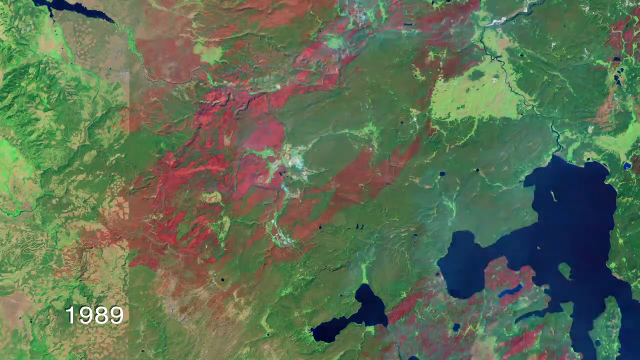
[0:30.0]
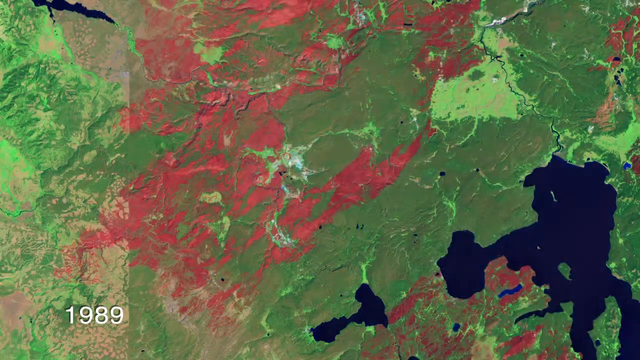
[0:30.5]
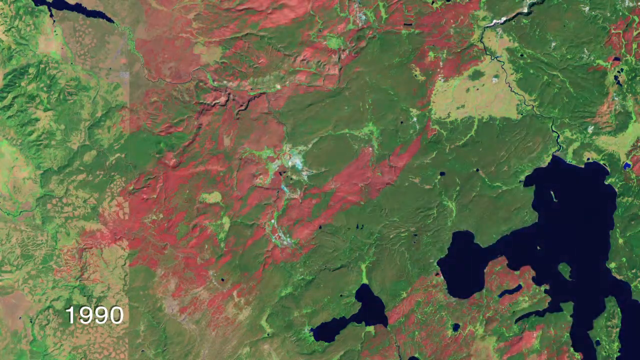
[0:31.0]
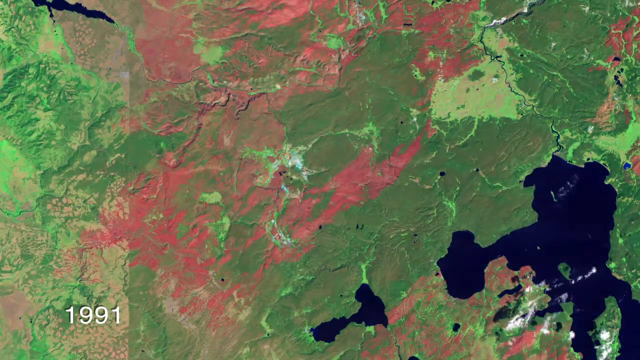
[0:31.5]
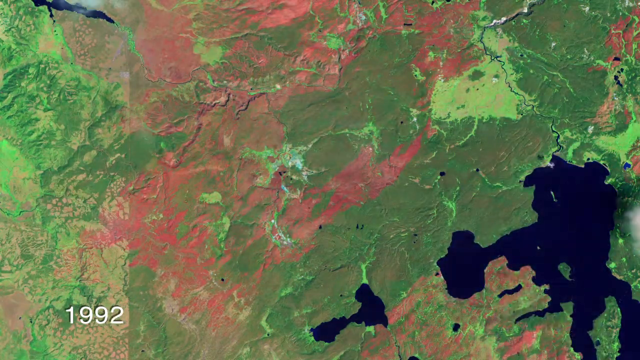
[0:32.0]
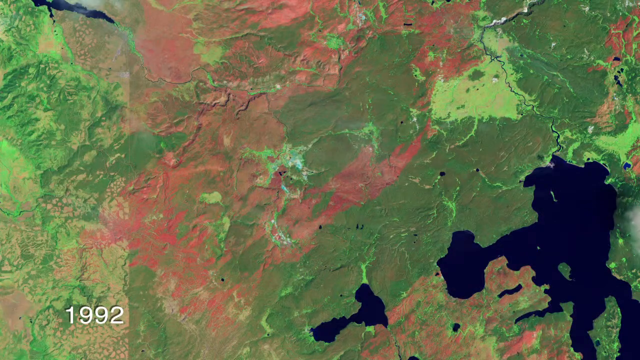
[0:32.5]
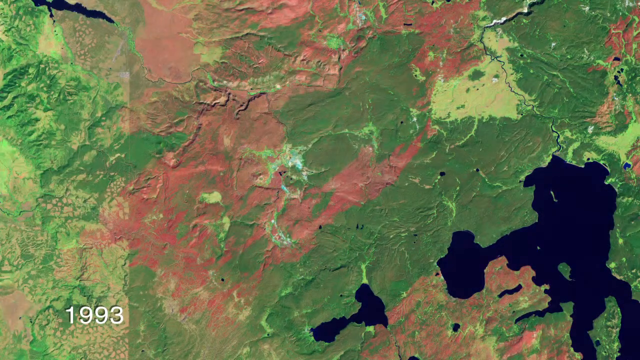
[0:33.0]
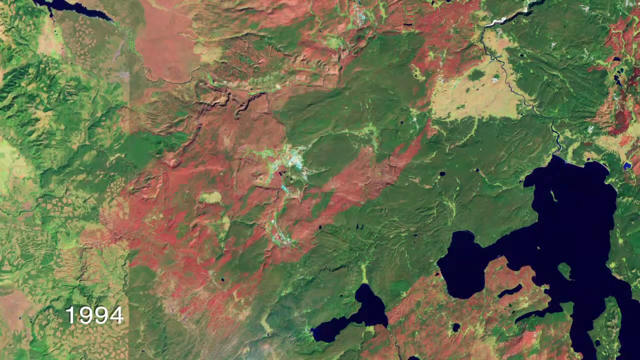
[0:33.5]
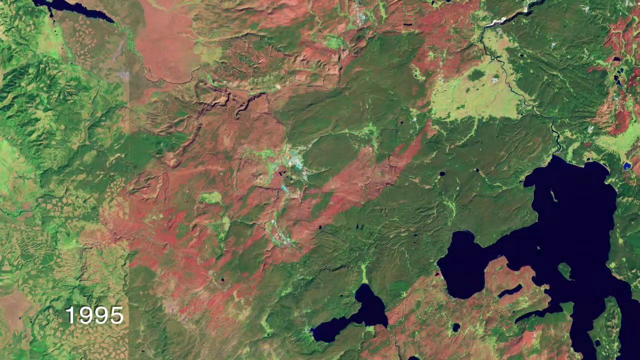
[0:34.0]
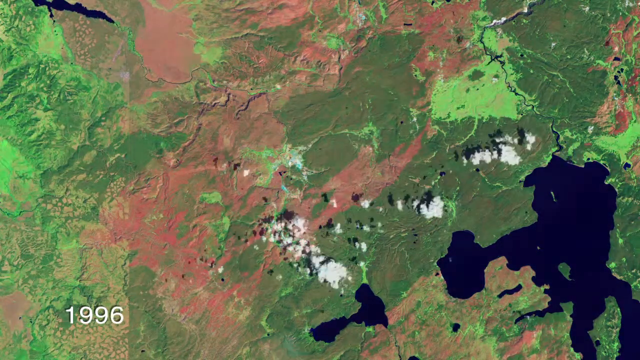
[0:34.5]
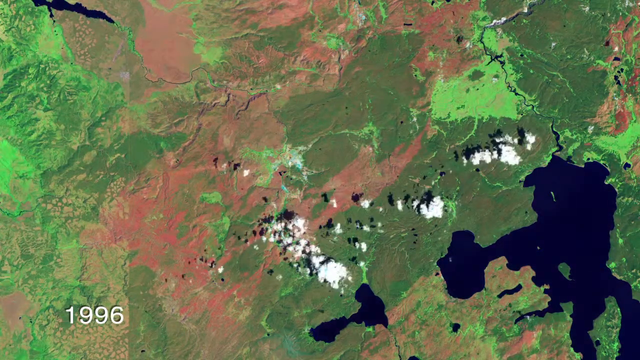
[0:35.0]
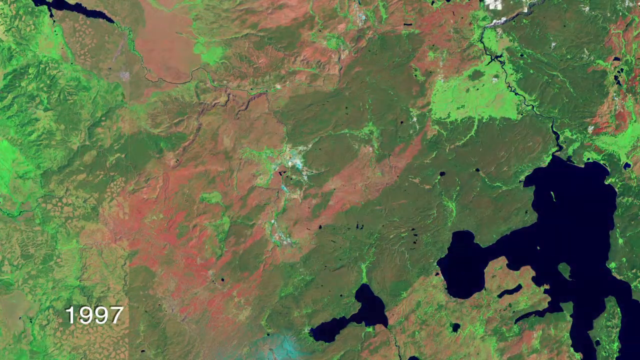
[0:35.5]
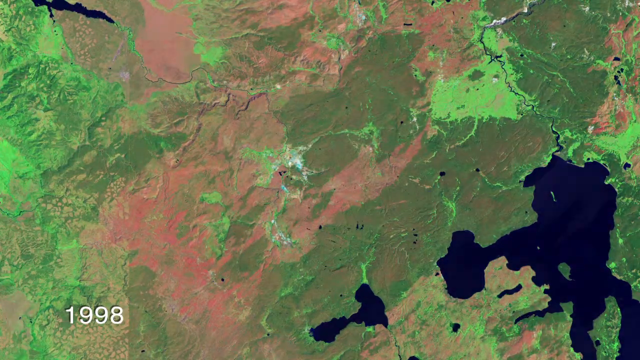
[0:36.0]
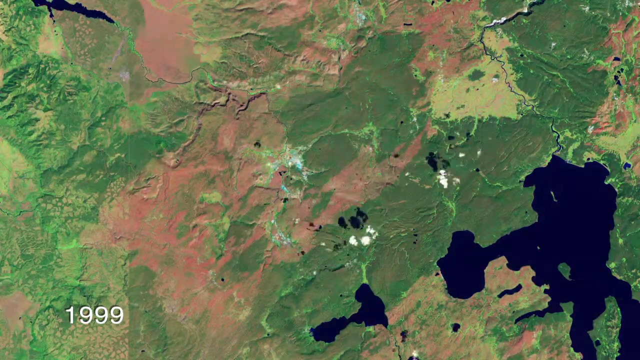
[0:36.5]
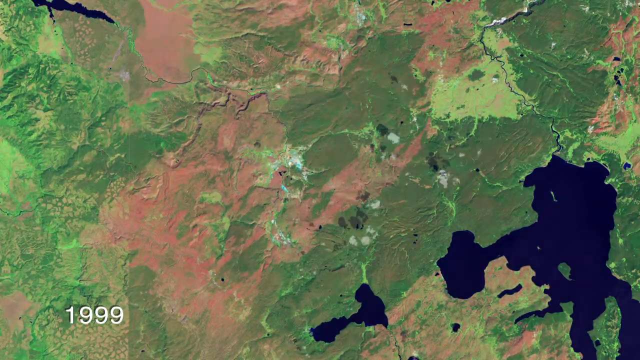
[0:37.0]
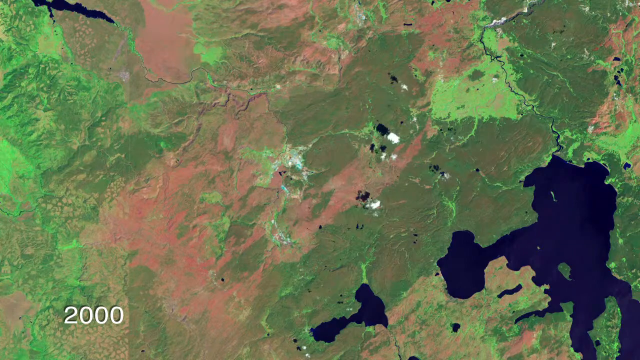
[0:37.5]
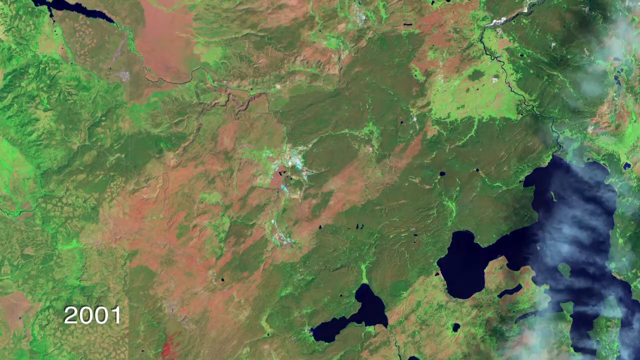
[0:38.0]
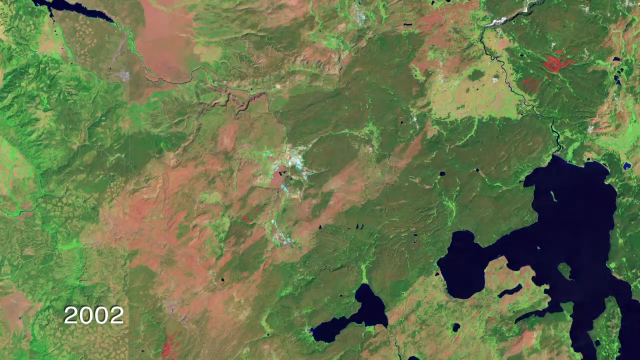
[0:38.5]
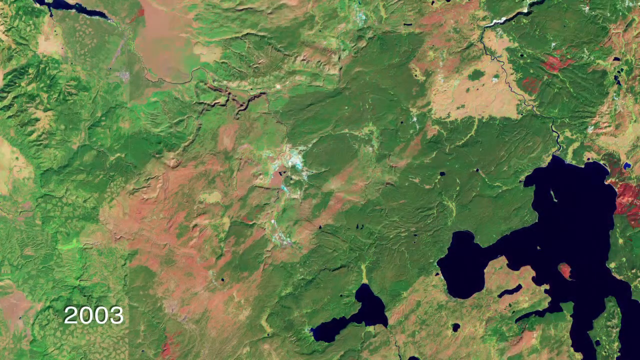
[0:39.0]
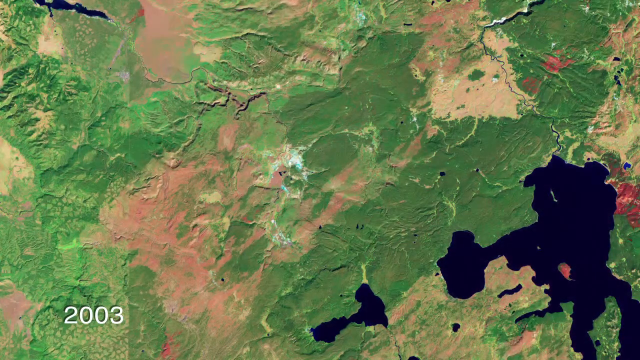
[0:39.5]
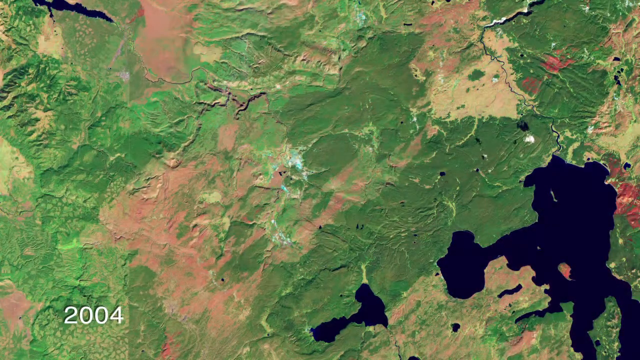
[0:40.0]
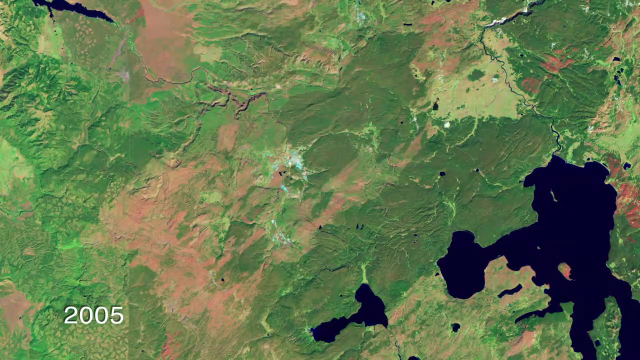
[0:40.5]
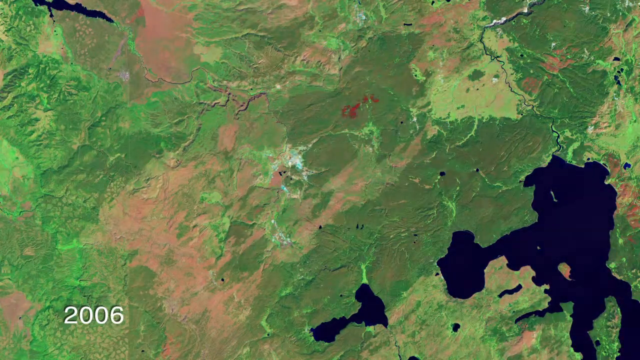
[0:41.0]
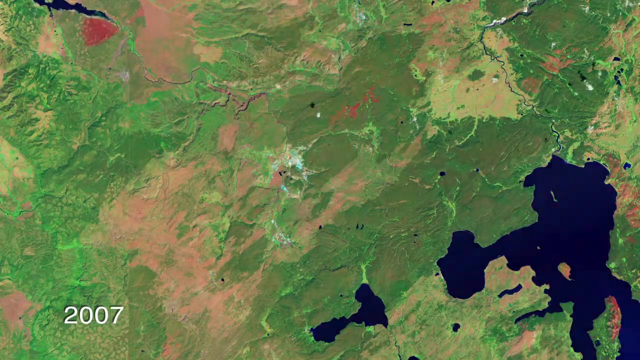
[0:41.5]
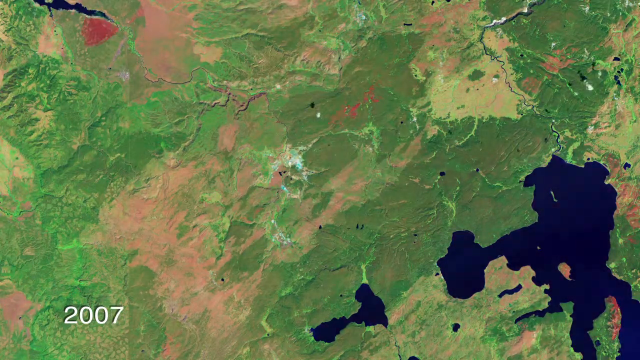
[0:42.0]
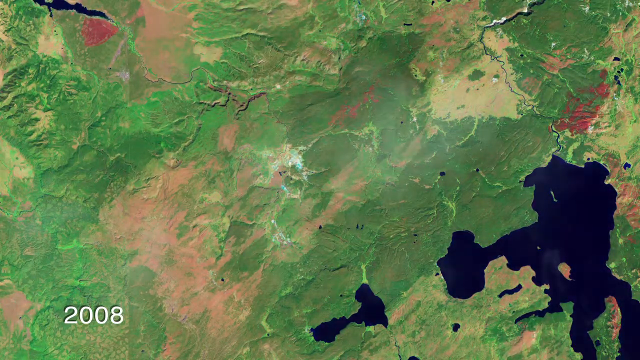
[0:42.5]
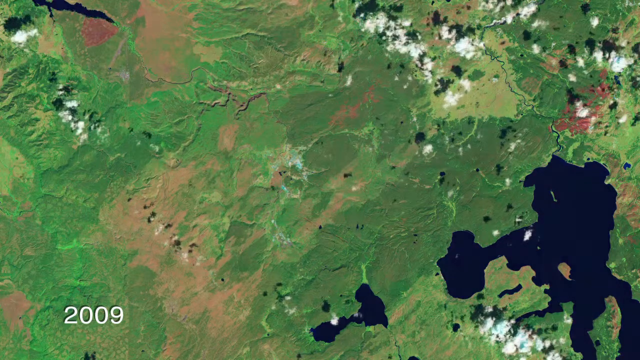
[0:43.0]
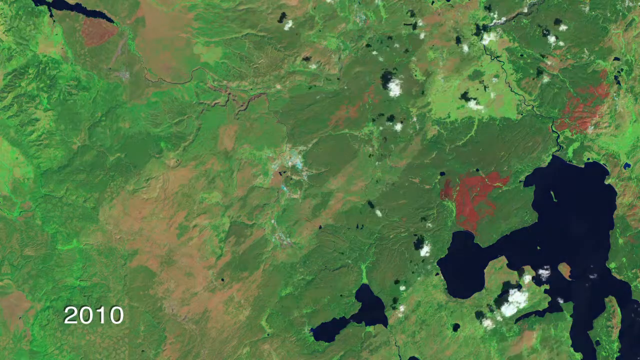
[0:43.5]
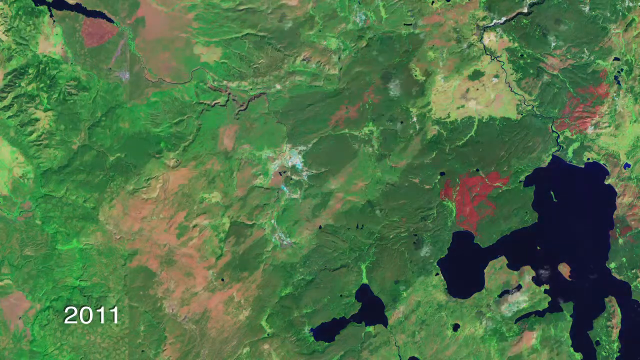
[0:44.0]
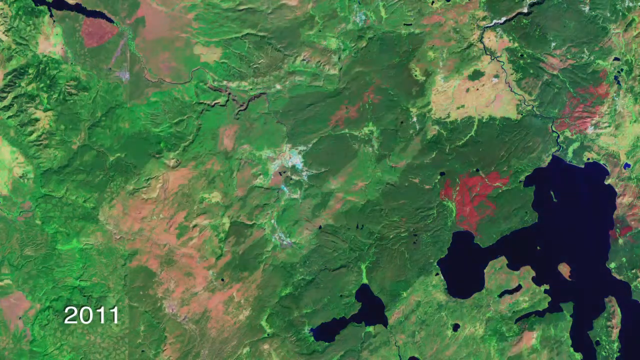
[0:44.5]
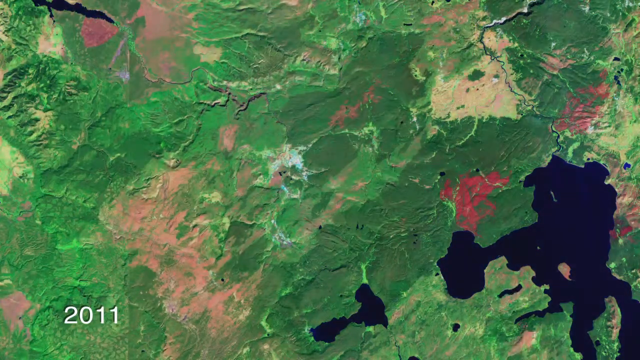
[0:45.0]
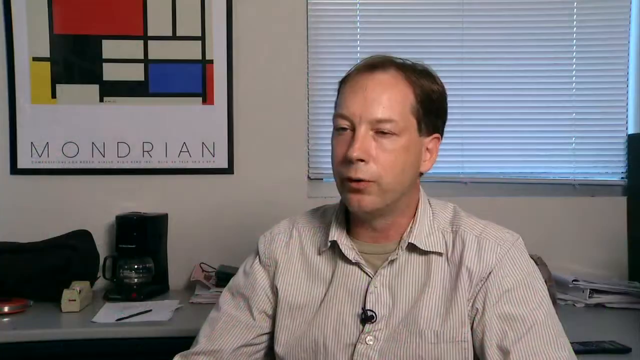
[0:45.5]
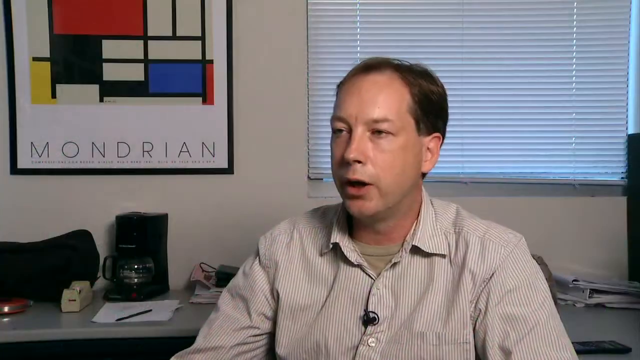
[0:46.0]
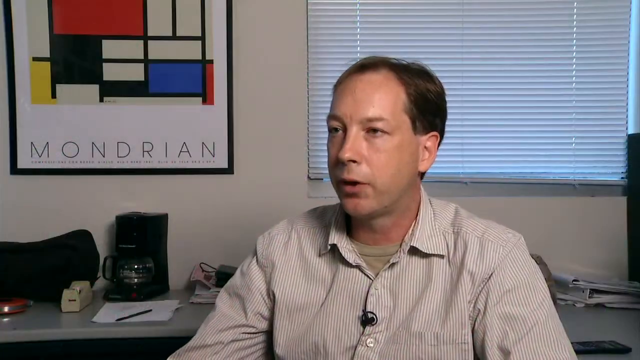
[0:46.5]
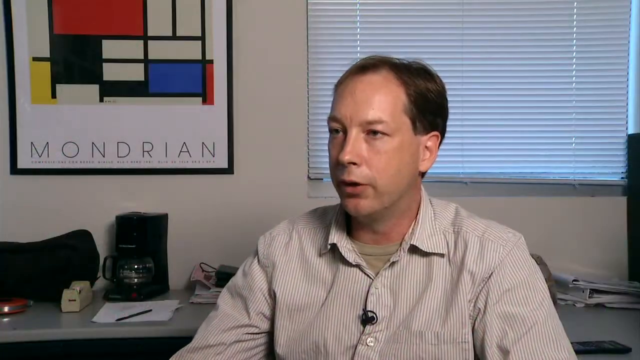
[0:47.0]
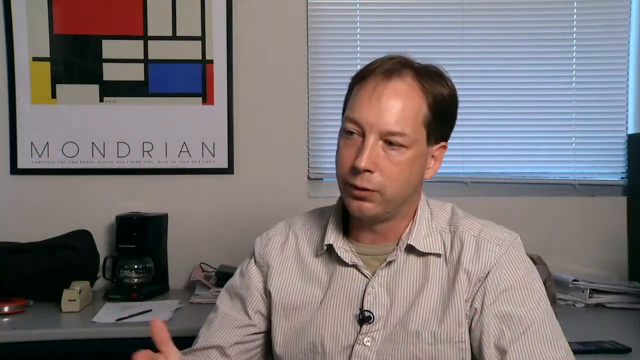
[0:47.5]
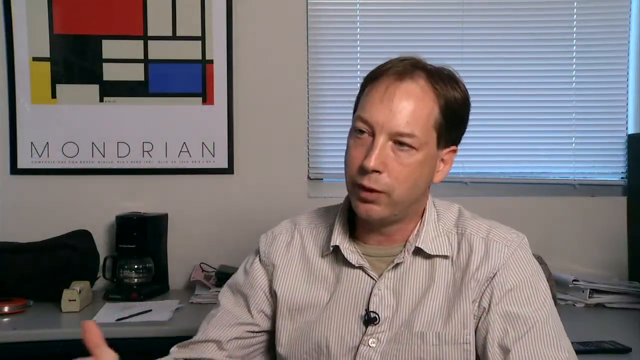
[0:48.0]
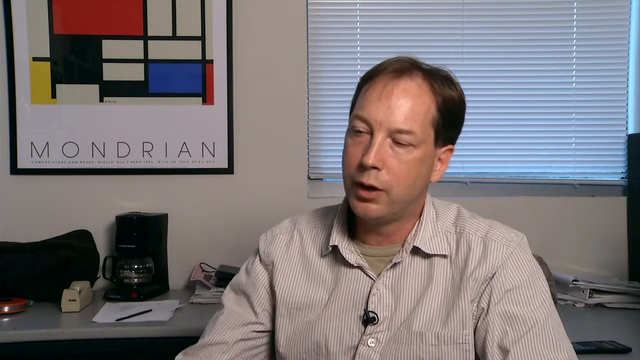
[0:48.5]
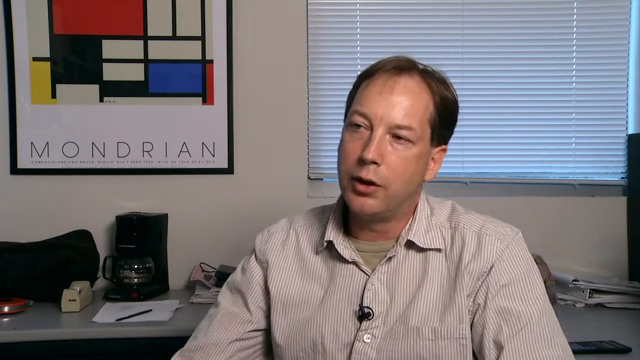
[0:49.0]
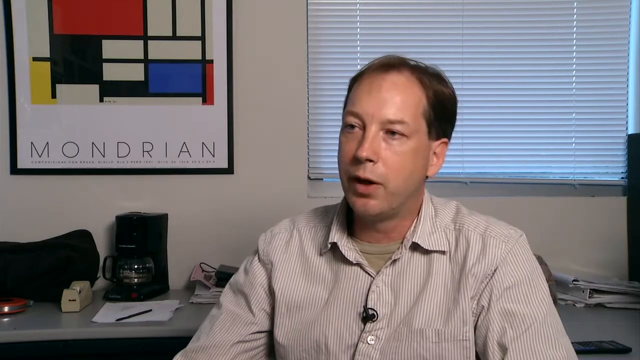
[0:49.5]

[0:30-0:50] An overhead view of a map of the earth shows Yosemite National Park in different colors. As the video goes on, the colors of the park change, almost like a time-lapse of things changing over time. Clouds begin to hover over certain areas of the map, moving to the right and to the left and coming in from the top and the bottom. The scene then switches to a man in an office with a window with blinds behind him and a picture on the wall behind him that says "Mondrian". Under the picture is a table with a coffee pot, a coffee maker, a tape dispenser, and a piece of paper with a pen on top of it. The man talks to the camera or to an interviewer near the camera, looking somewhat up to the left. He has a mic on his striped dress shirt, which is buttoned up with the top buttons open, showing a T-shirt underneath. The video then goes back to the map.